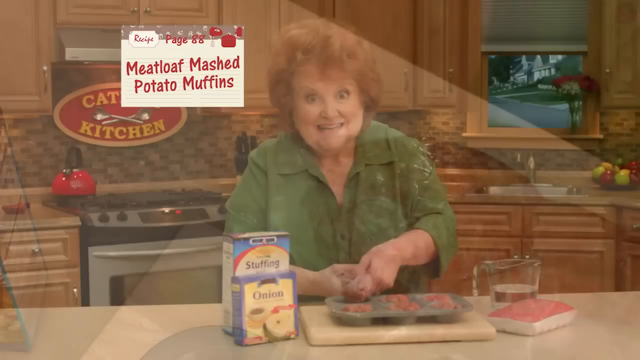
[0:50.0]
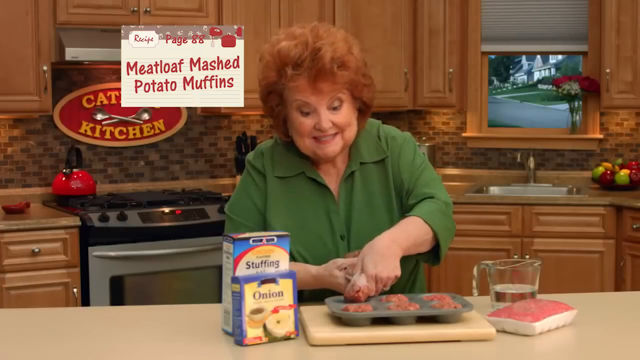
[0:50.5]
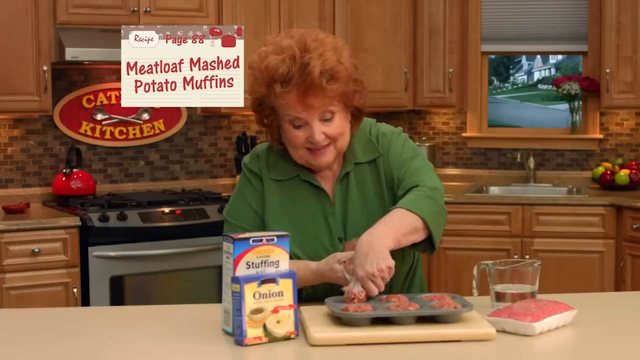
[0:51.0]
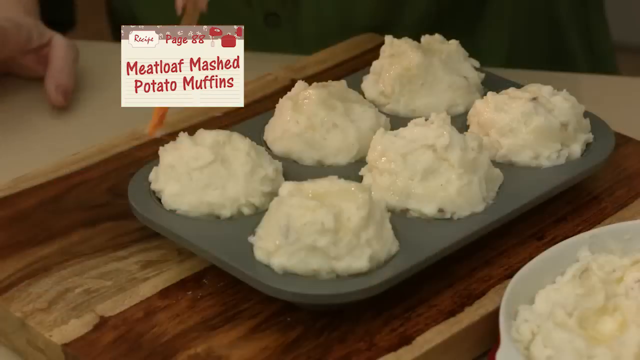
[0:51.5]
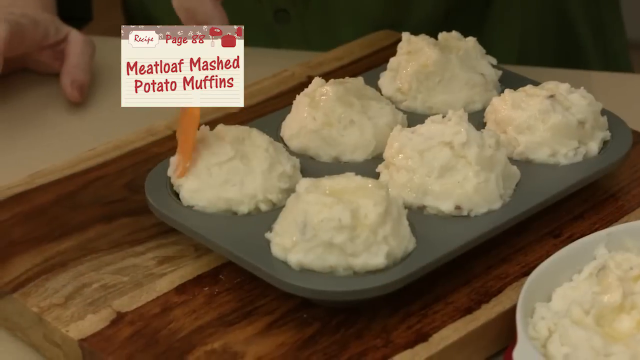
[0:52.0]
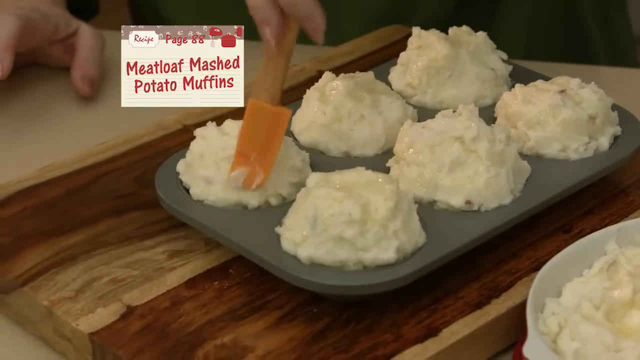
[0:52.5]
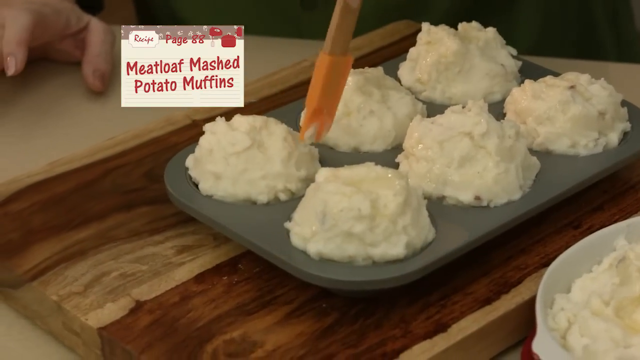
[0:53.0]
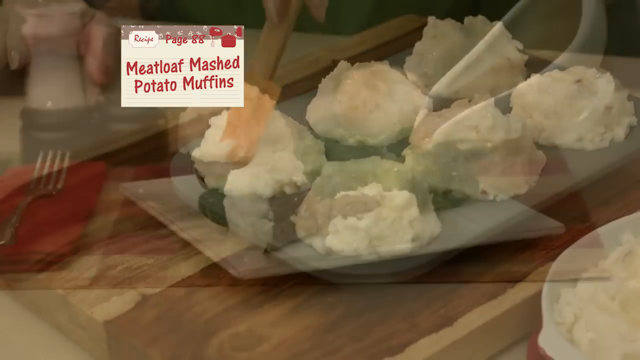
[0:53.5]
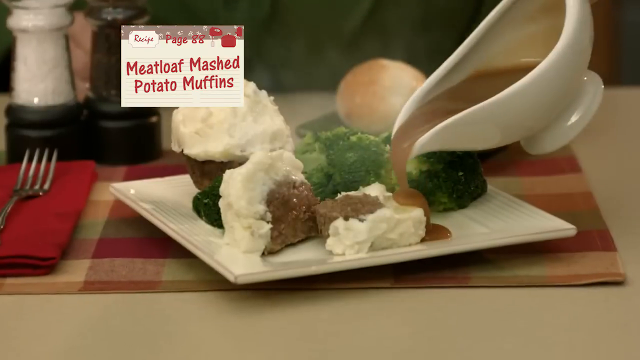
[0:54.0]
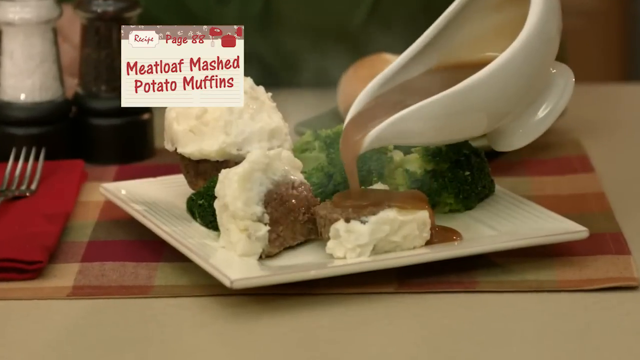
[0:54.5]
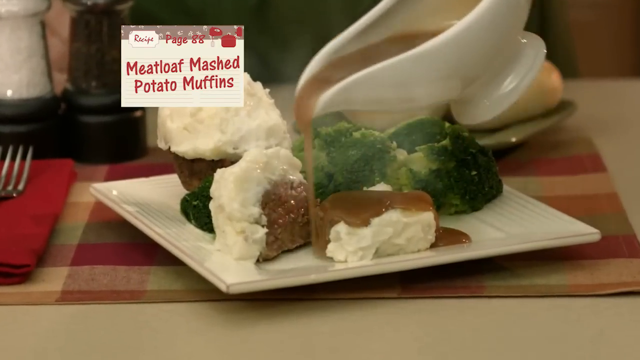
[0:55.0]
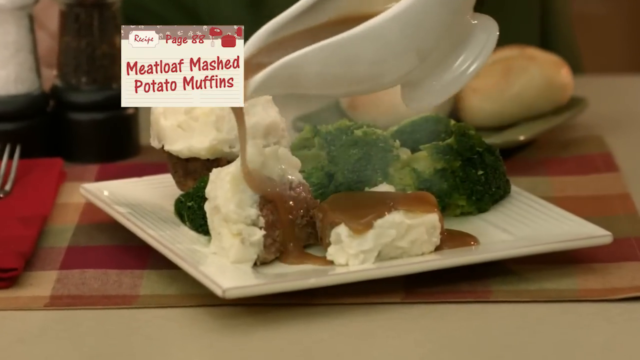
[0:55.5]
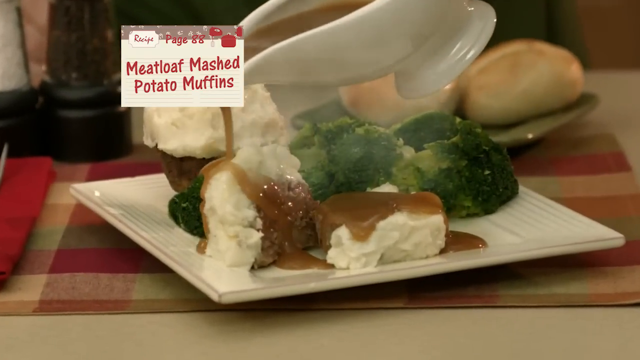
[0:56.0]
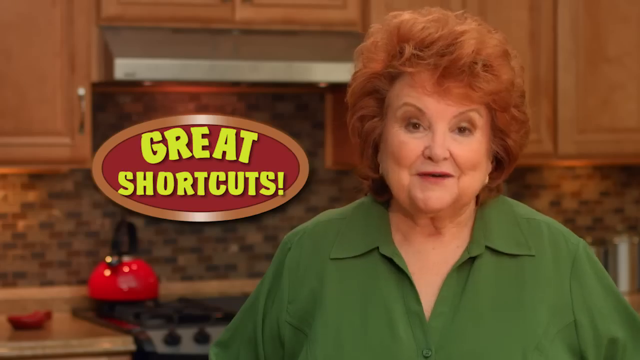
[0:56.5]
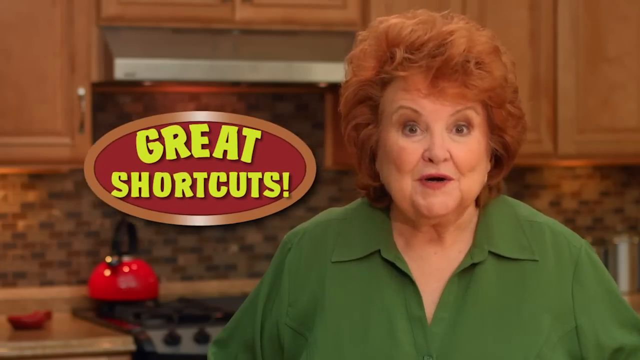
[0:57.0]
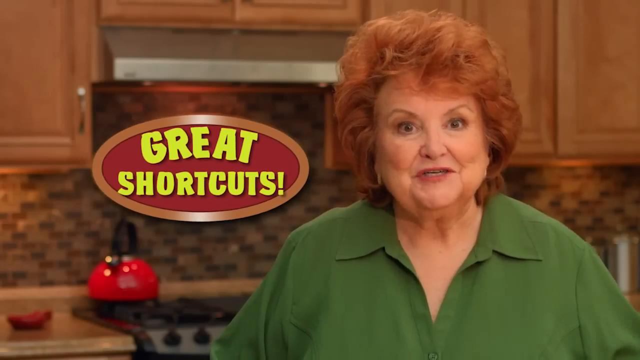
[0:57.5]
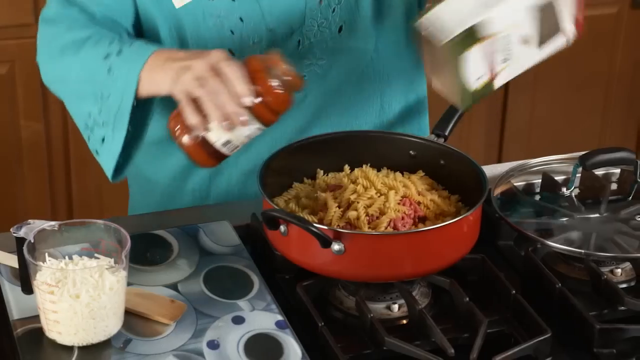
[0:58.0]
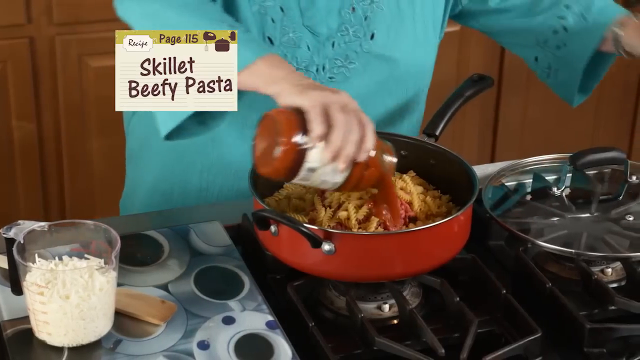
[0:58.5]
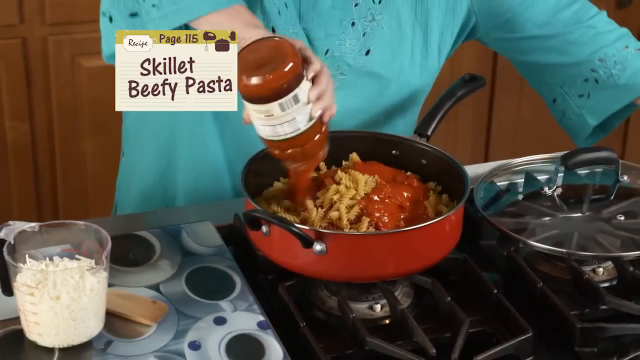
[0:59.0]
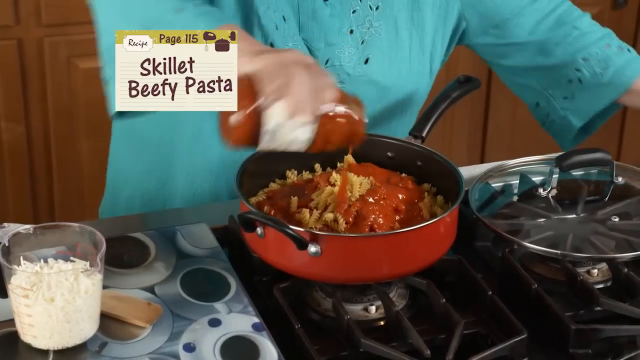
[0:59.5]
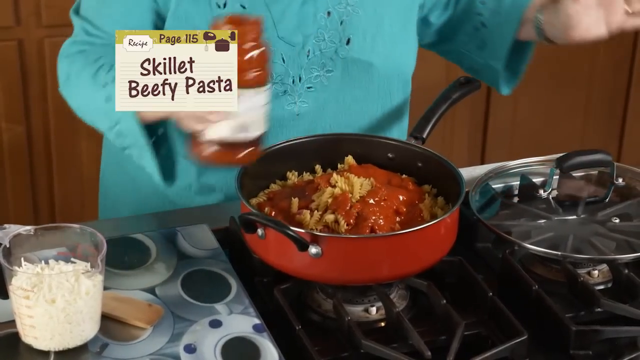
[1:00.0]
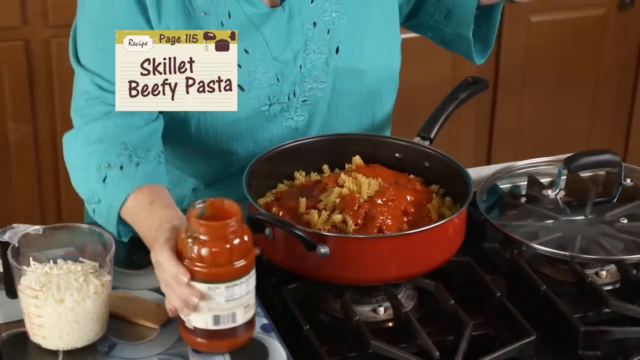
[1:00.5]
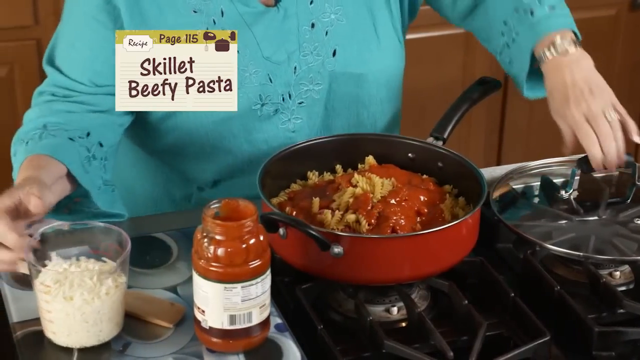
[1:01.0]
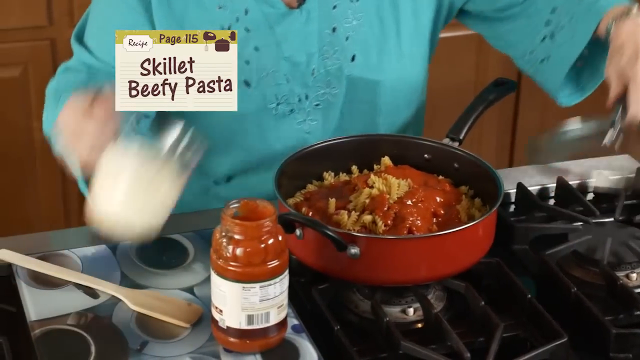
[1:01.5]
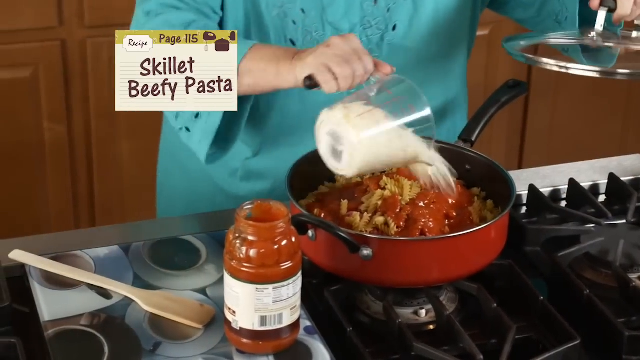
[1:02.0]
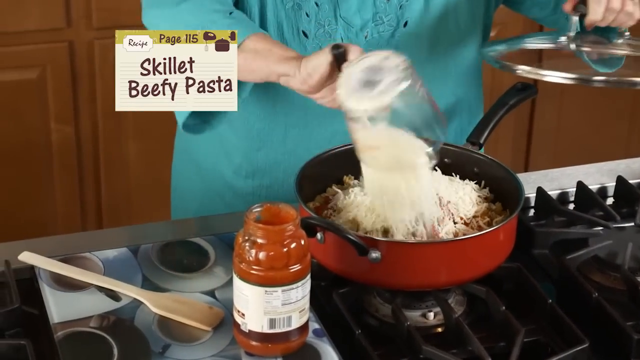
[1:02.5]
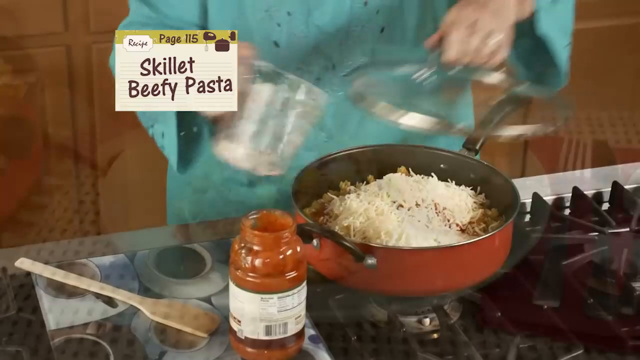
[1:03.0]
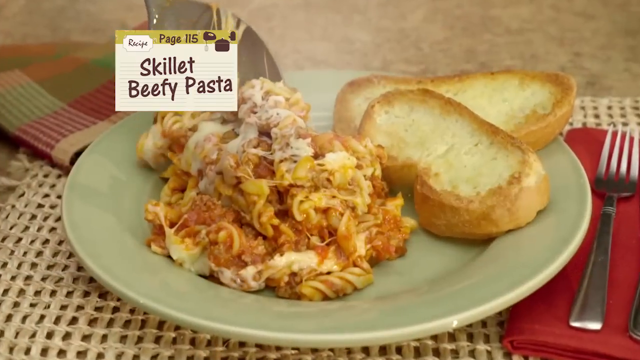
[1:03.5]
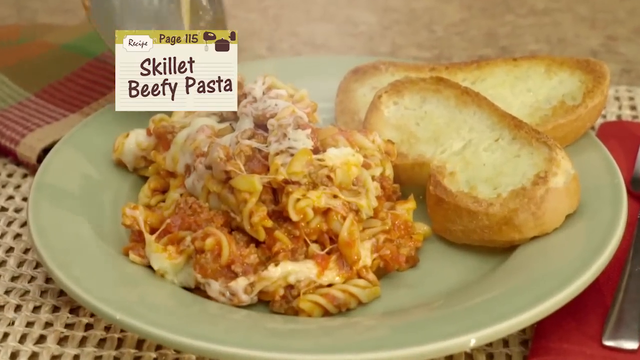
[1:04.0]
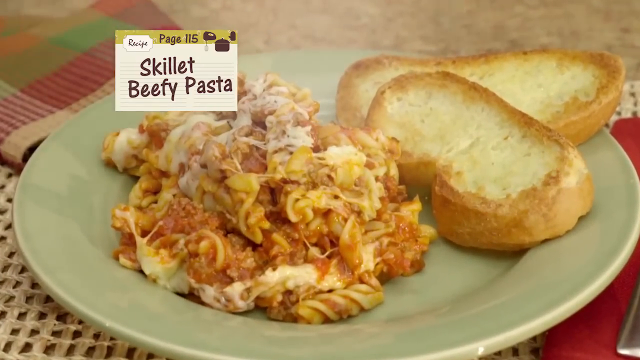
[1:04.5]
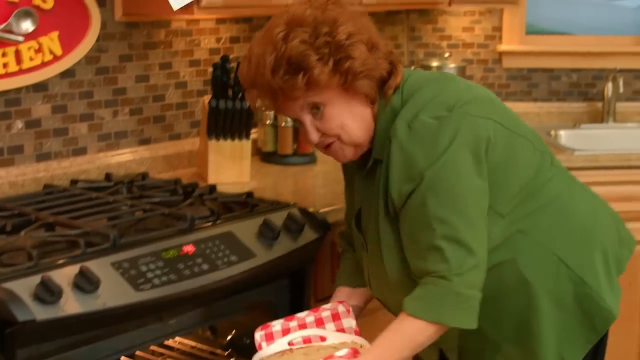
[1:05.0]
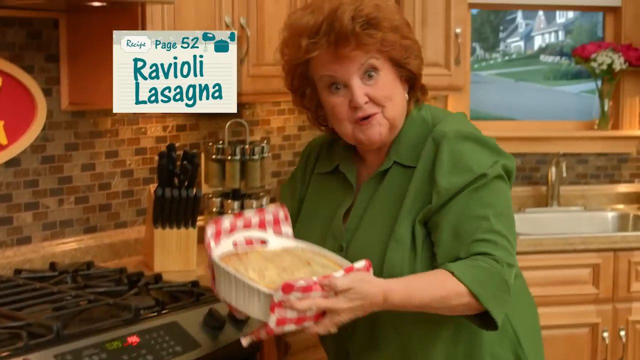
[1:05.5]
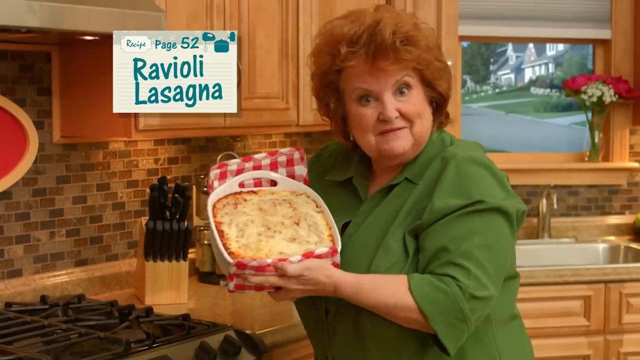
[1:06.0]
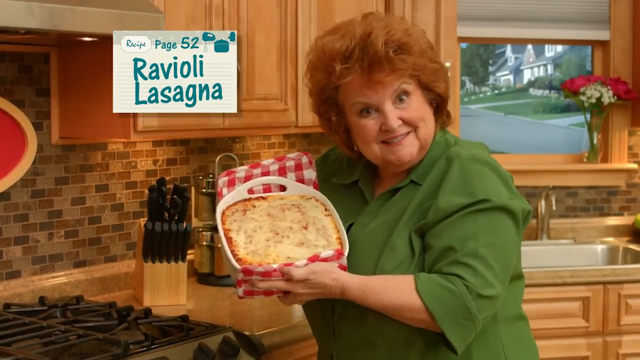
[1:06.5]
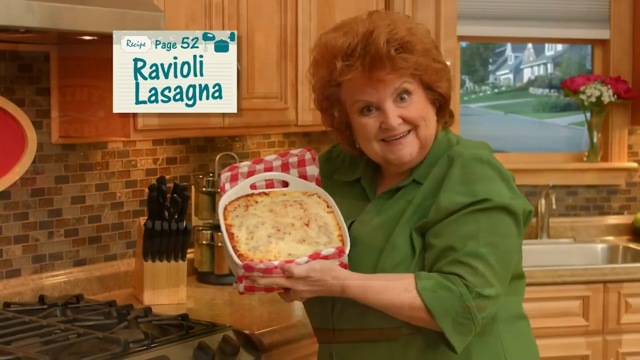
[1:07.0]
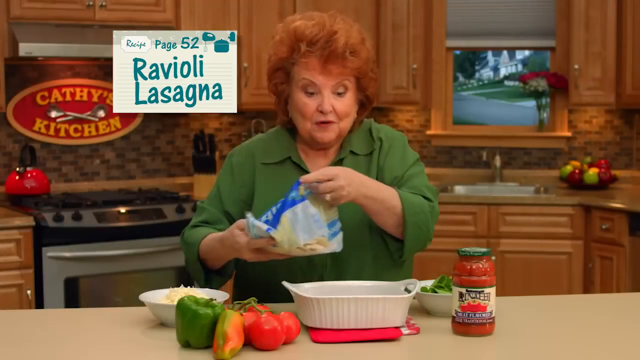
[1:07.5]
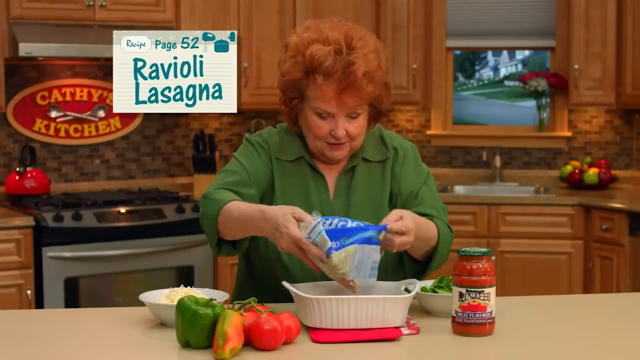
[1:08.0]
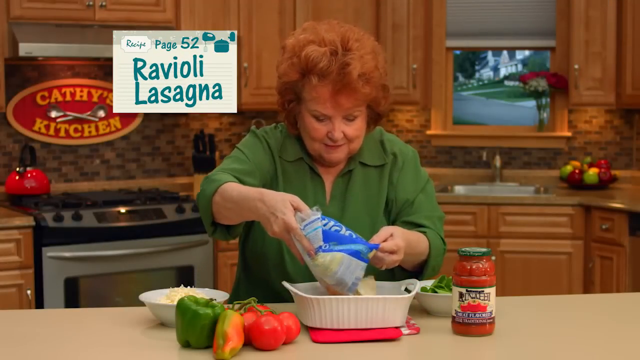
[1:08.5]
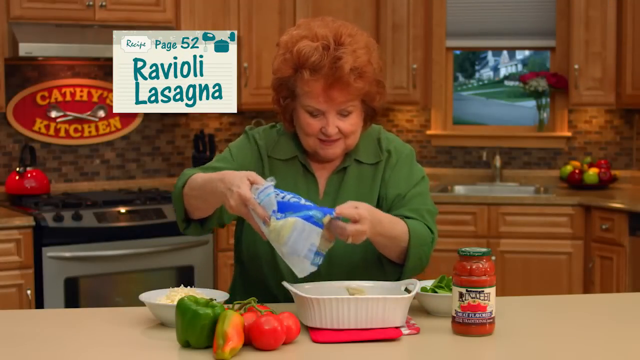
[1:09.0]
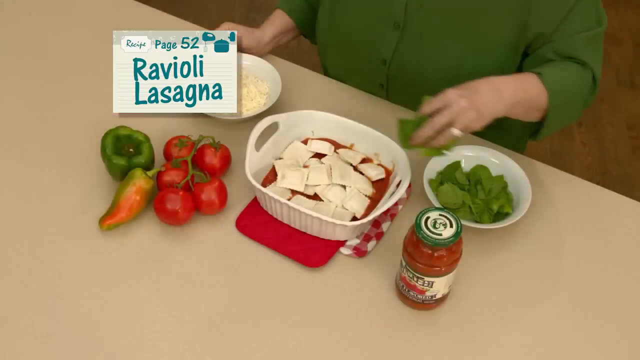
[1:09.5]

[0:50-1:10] The meatloaf and mashed potatoes have been cooked and are ready, and the woman pours gravy on top of the mashed potatoes. The video transitions to a solo shot of the red-haired woman with a cutout that says "great shortcuts" while she speaks. It then transitions to her cooking again, with text indicating skillet beefy pasta on page 115. She puts all the ingredients into the bowl, and the finished product is shown: two pieces of bread and the finished pasta in the bowl. Next comes a solo shot of her holding a pan full of ingredients, and she puts all the ingredients into the bowl right before cooking. She says she is cooking regular lasagna, which is on page 52.